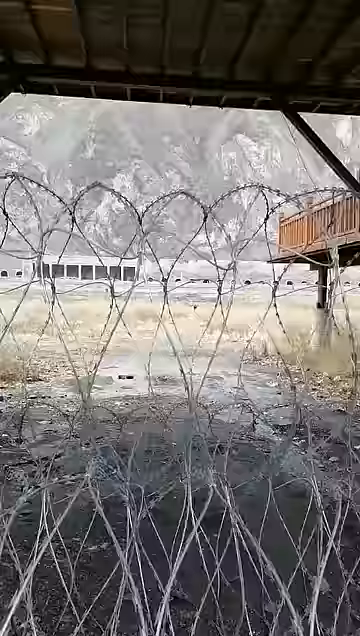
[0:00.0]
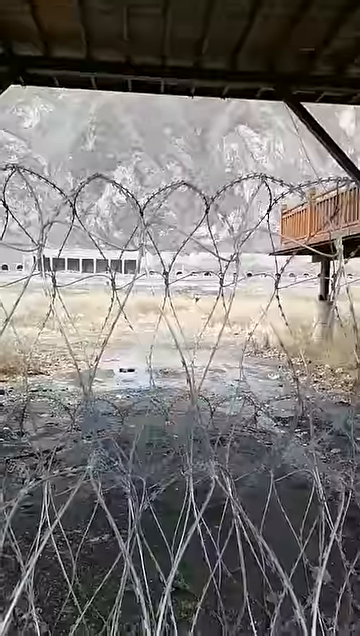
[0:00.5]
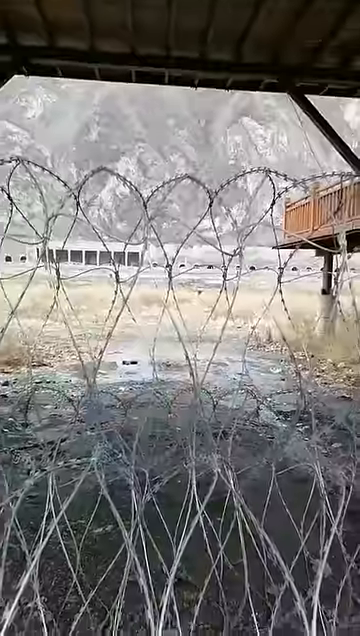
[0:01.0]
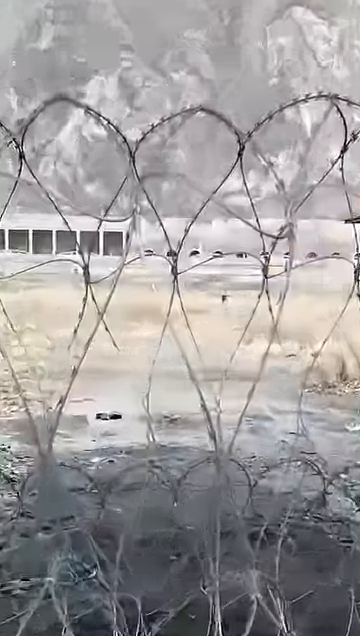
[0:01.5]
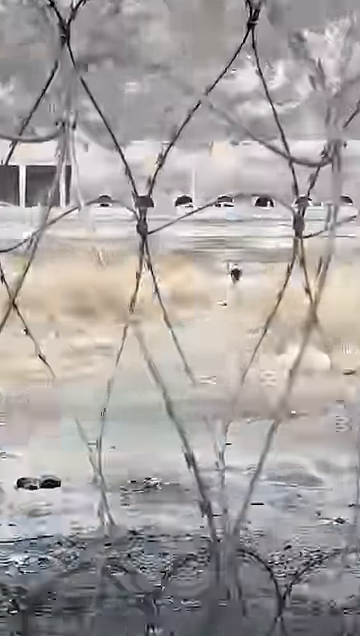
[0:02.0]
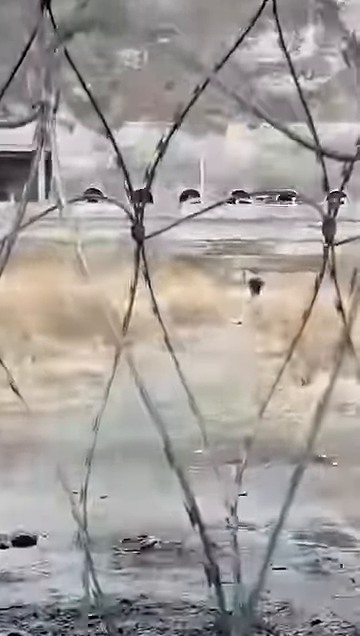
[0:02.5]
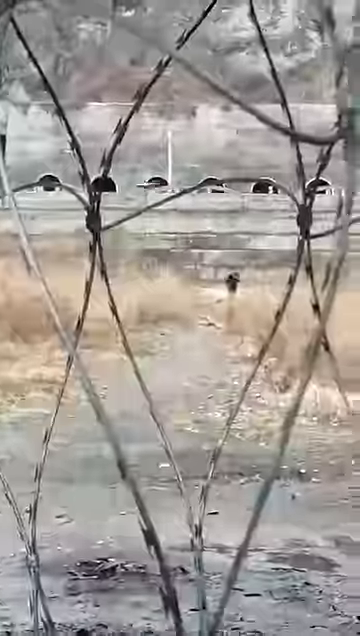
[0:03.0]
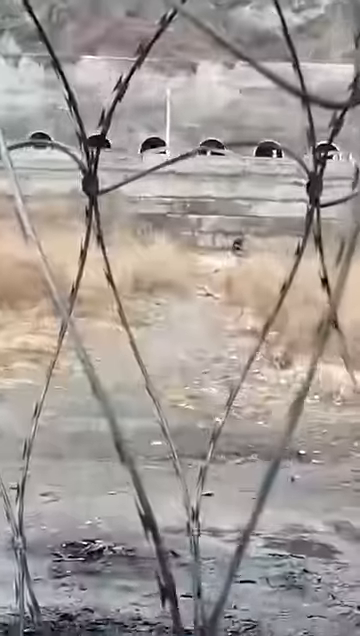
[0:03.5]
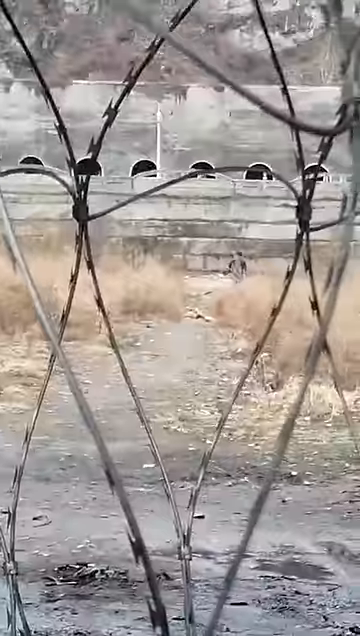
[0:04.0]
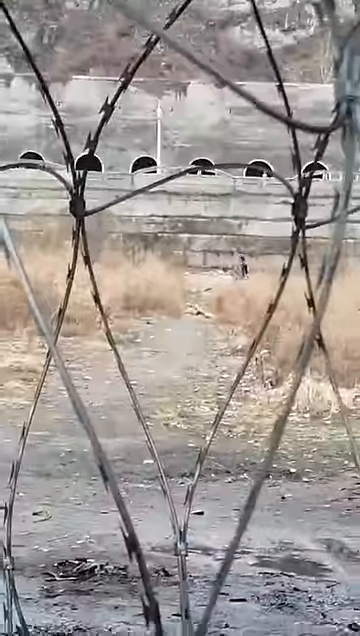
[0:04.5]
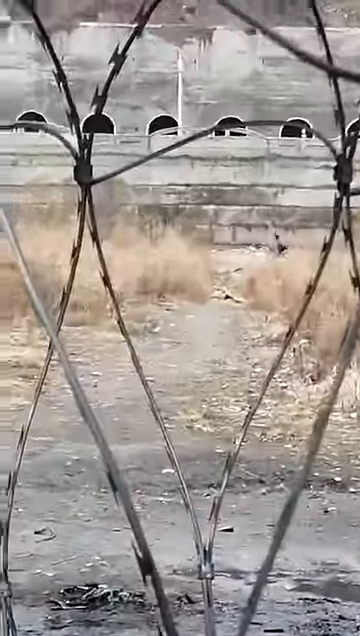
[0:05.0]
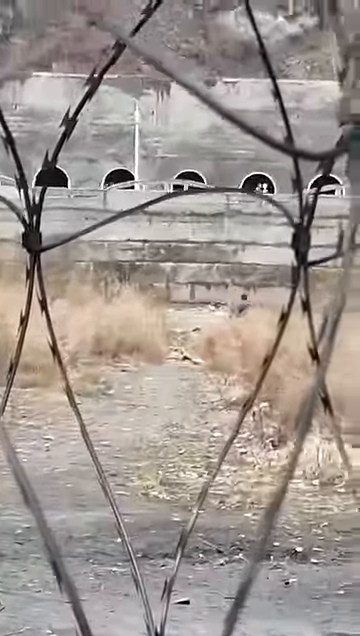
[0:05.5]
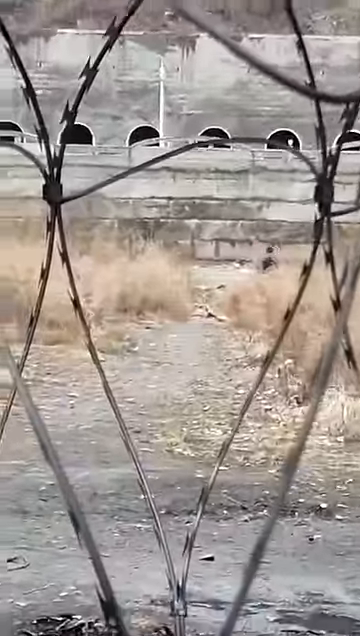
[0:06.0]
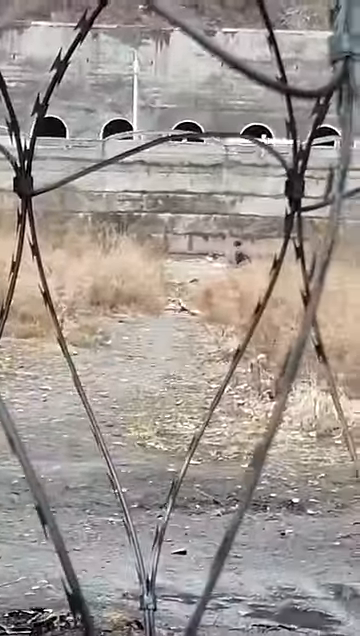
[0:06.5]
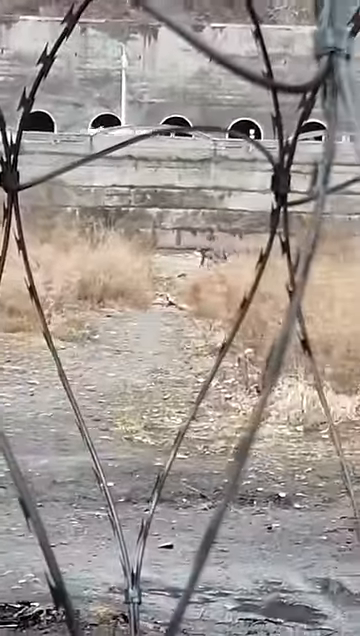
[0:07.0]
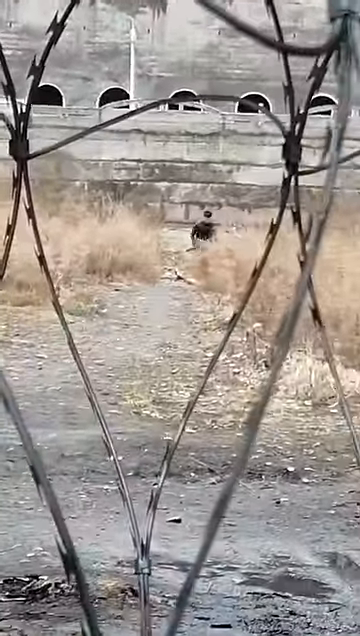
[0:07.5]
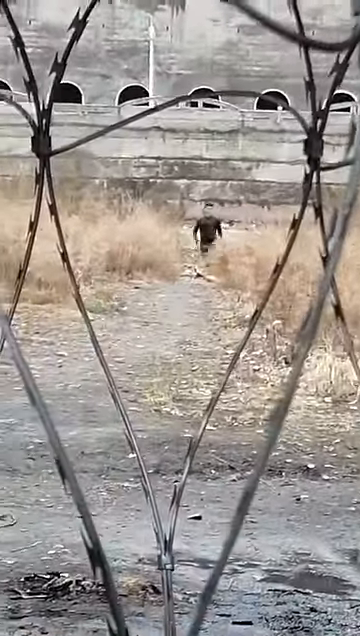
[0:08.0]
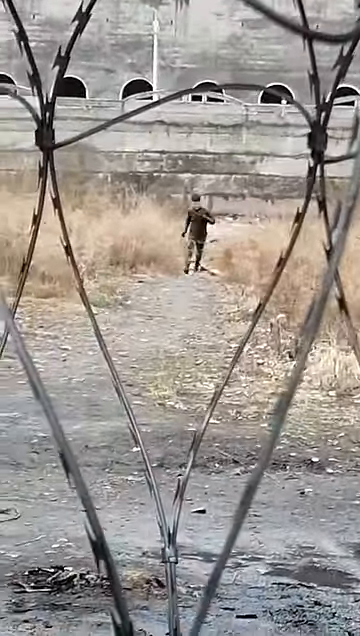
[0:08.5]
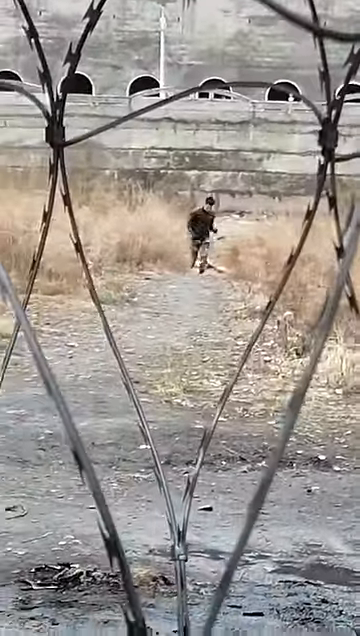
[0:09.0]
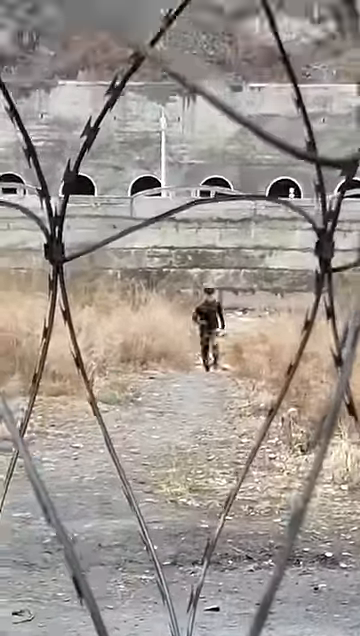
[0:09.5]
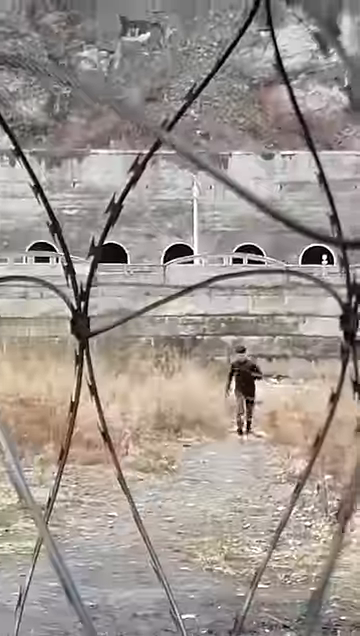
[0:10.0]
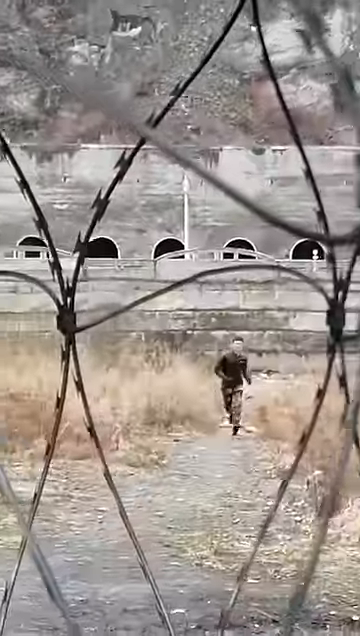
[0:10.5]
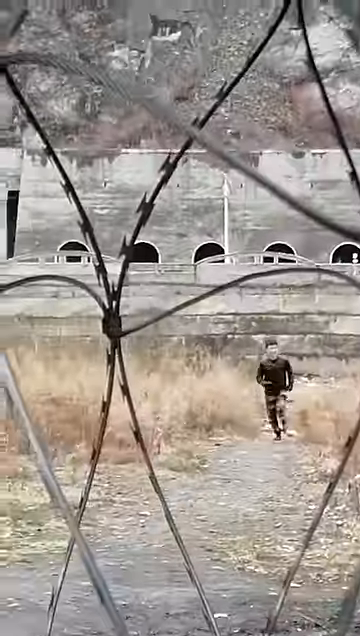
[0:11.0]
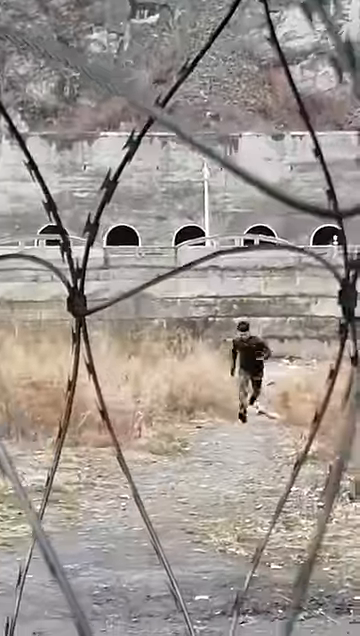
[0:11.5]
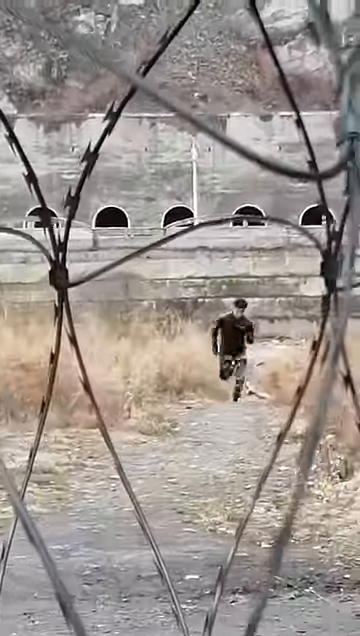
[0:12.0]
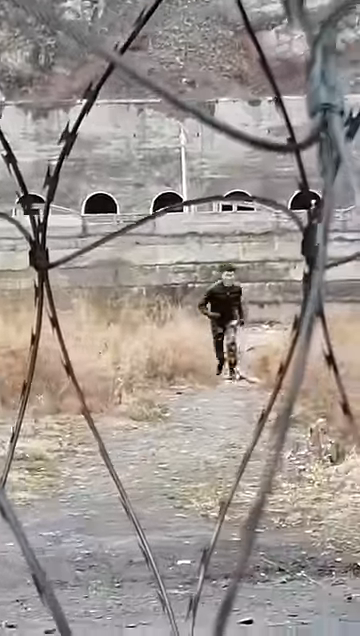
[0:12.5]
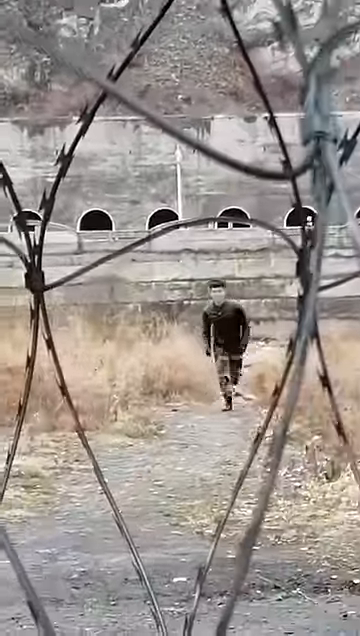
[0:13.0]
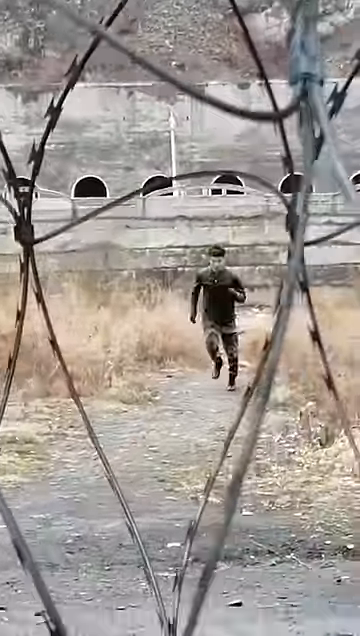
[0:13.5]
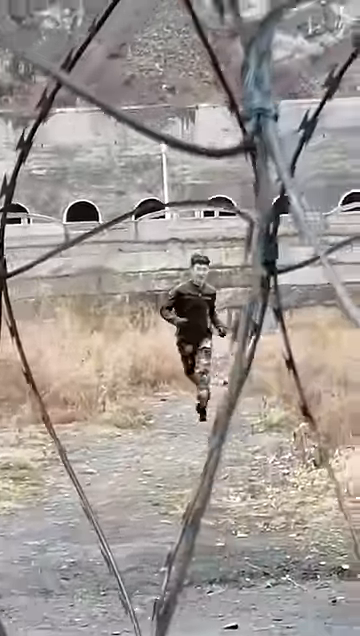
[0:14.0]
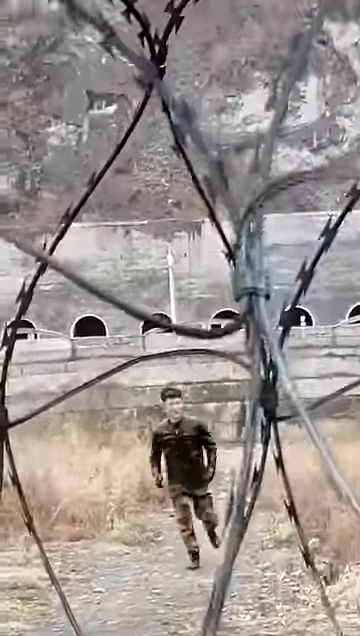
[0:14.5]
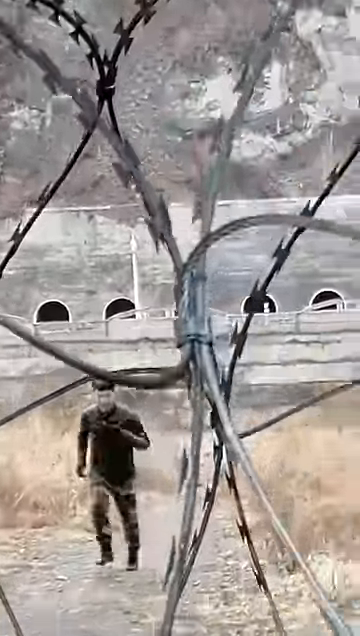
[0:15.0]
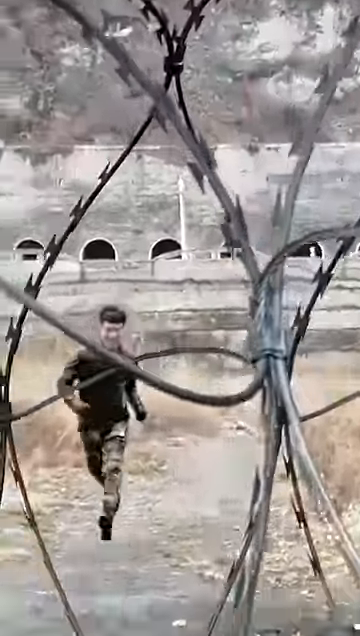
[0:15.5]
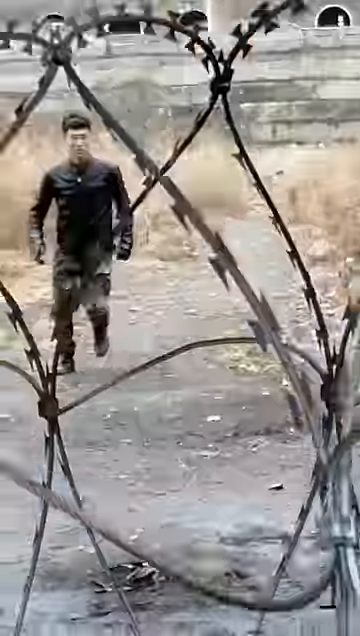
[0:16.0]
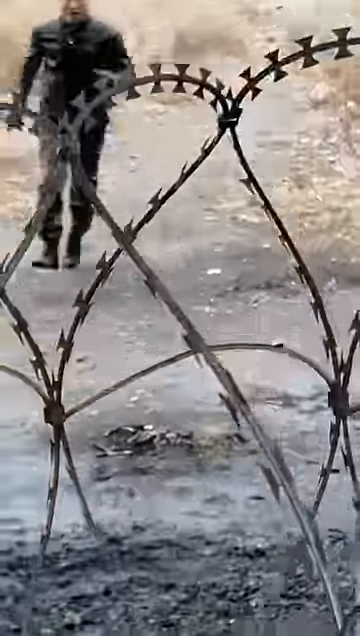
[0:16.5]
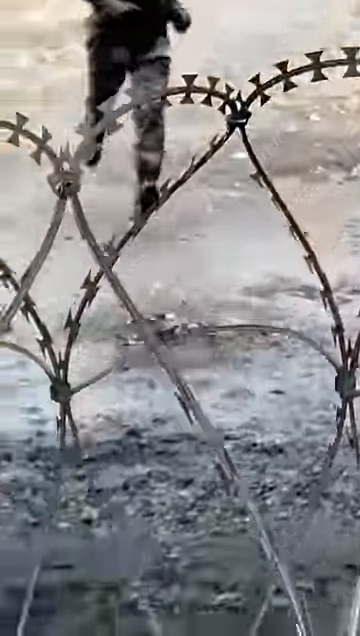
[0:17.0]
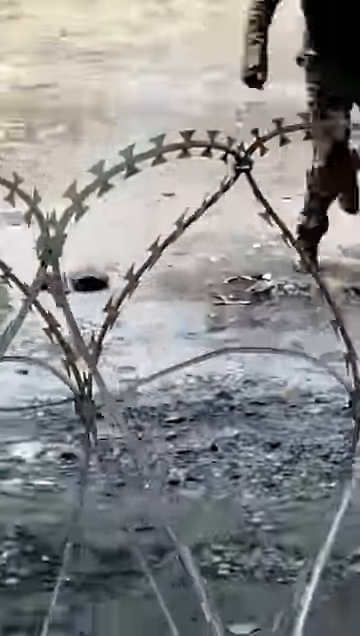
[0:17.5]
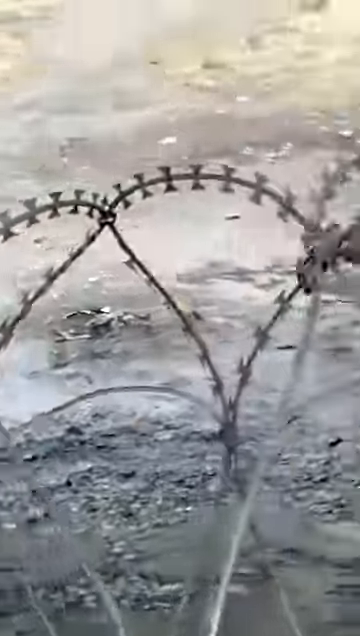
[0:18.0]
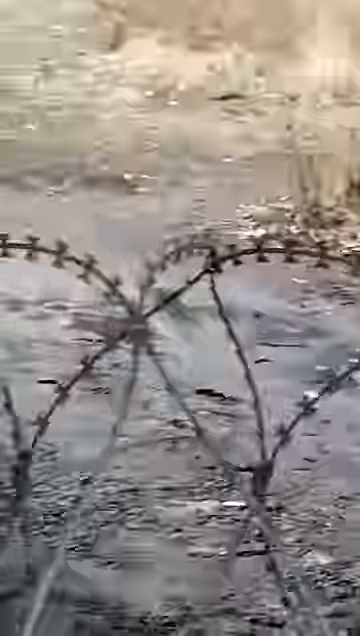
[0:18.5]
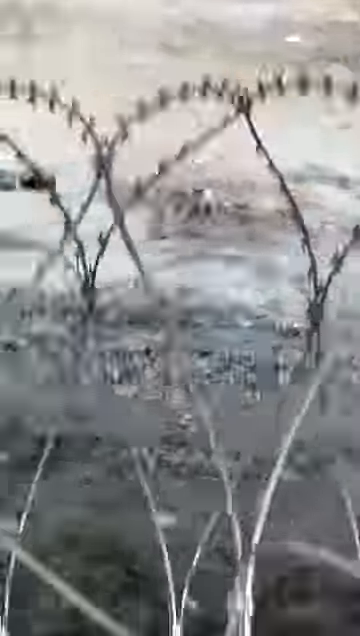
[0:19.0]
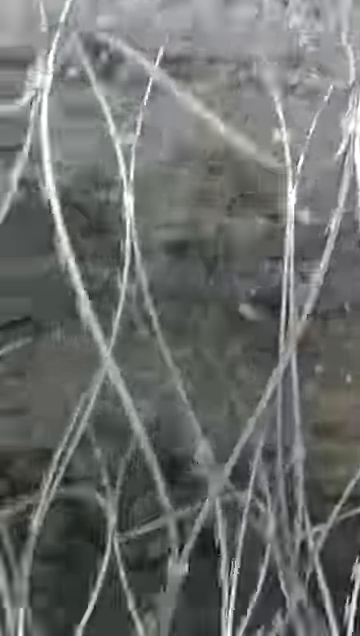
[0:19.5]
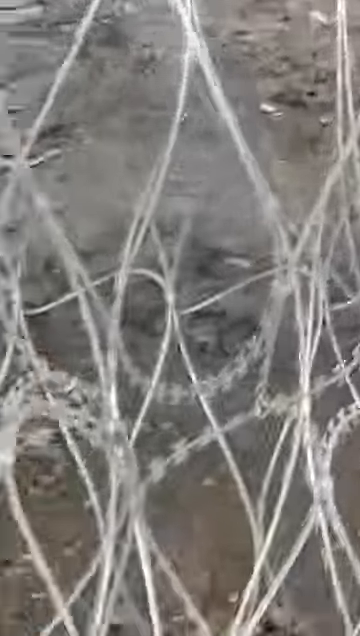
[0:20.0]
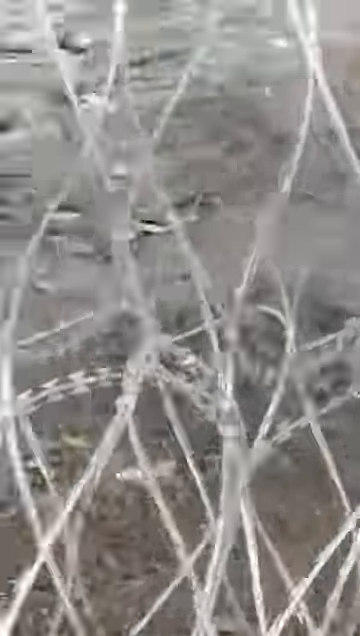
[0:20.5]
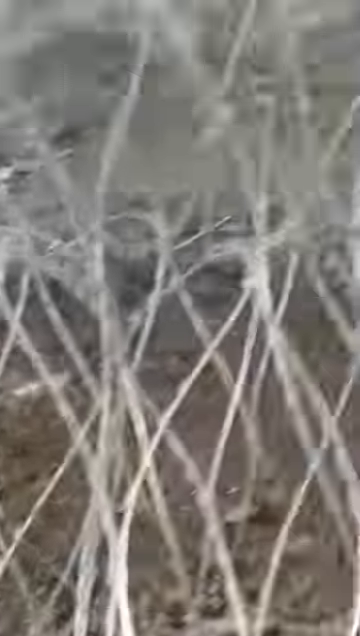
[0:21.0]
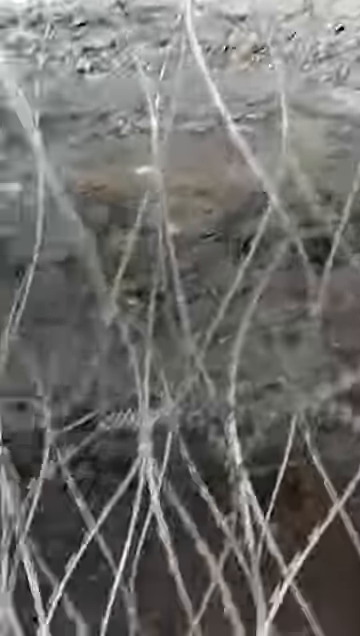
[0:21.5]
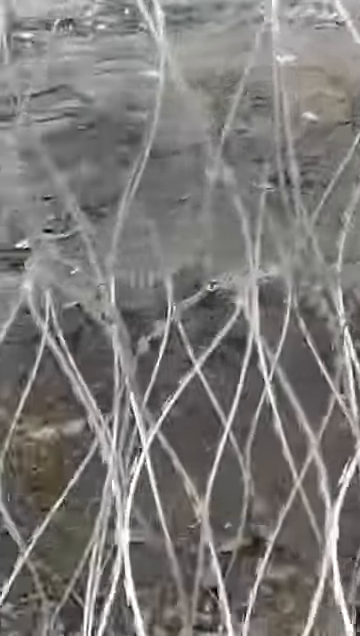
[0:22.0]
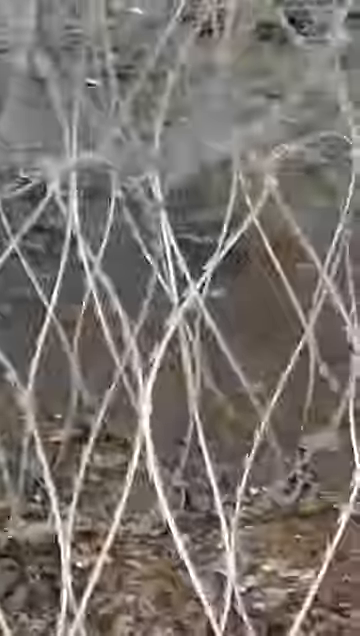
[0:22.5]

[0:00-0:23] The setting is clearly an industrial-type area with what looks like gravel and some dry grass around it, and a little trail runs through the middle. The cameraman stands behind some type of fencing-like material, and the camera looks through the fence. Far in the distance, a man stands next to some type of concrete structure that almost looks like it may be the underside of a bridge or a road. He wears a long-sleeved black shirt and gray pants. He starts running straight toward the camera, coming head-on through the view of the fence until he is almost there. Then he veers off to his left, possibly coming around the fencing toward the camera's position.